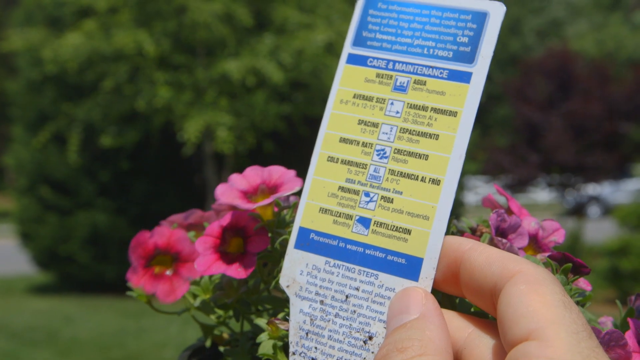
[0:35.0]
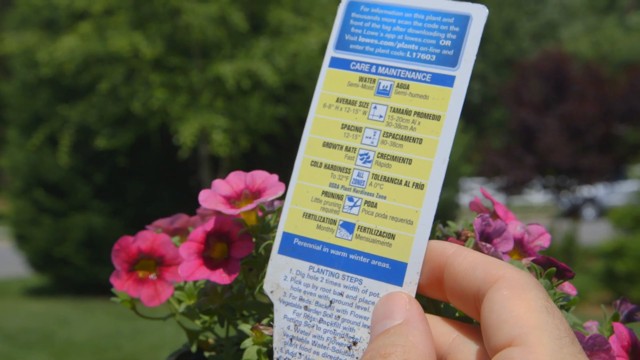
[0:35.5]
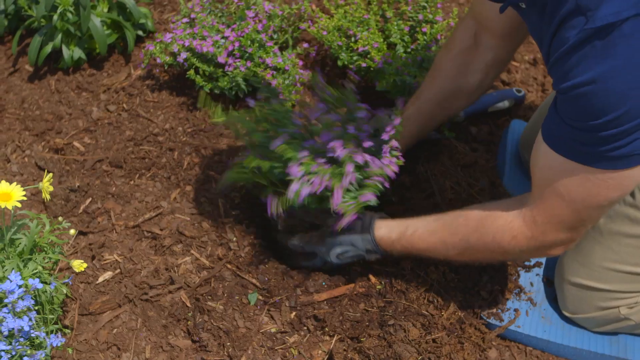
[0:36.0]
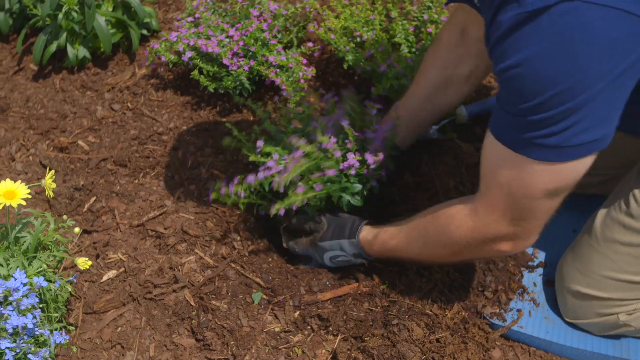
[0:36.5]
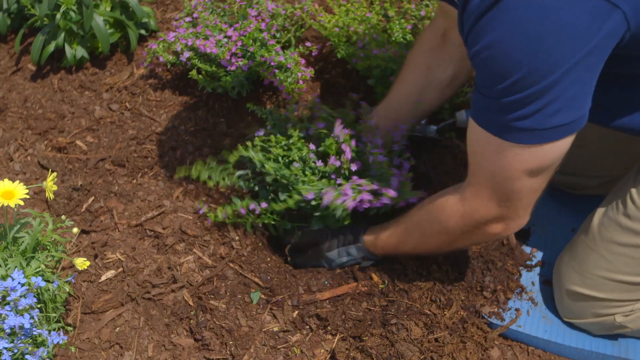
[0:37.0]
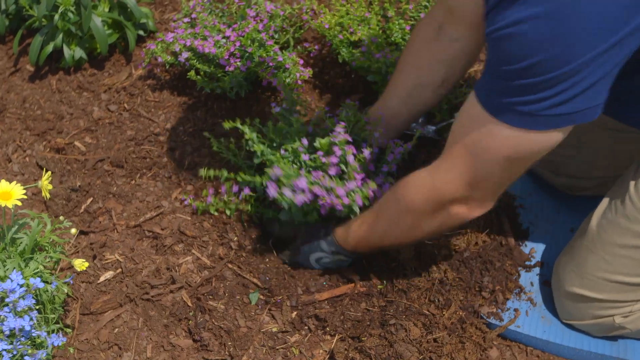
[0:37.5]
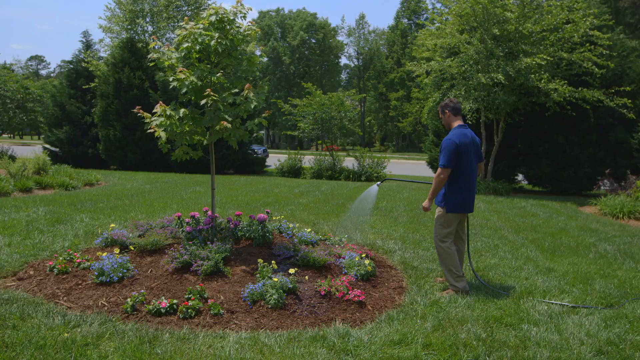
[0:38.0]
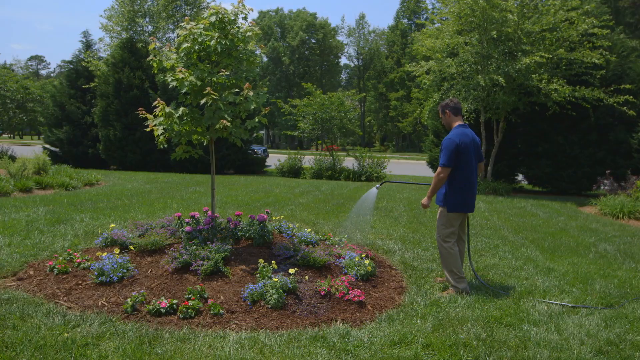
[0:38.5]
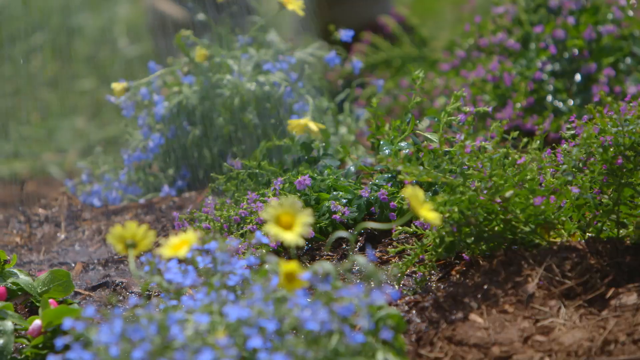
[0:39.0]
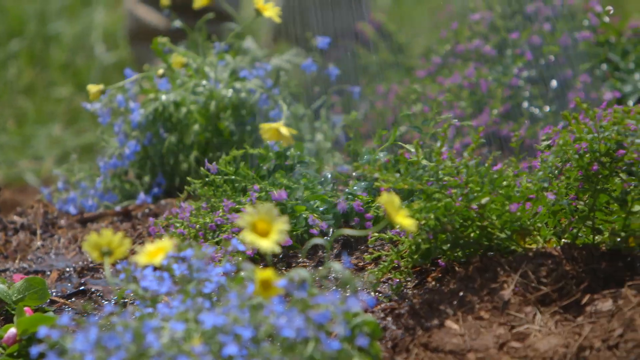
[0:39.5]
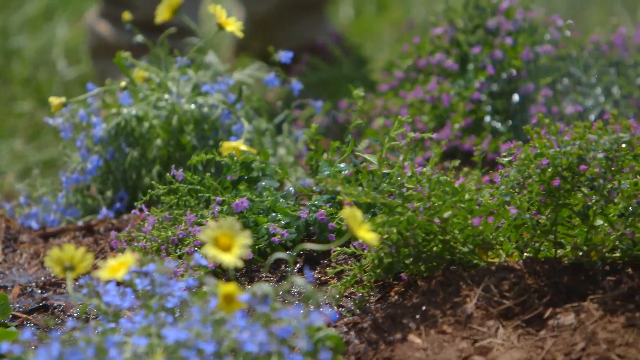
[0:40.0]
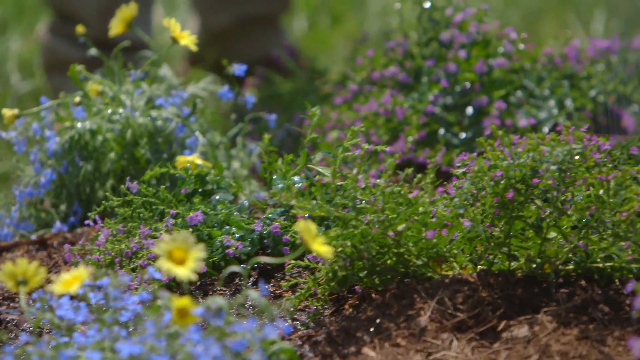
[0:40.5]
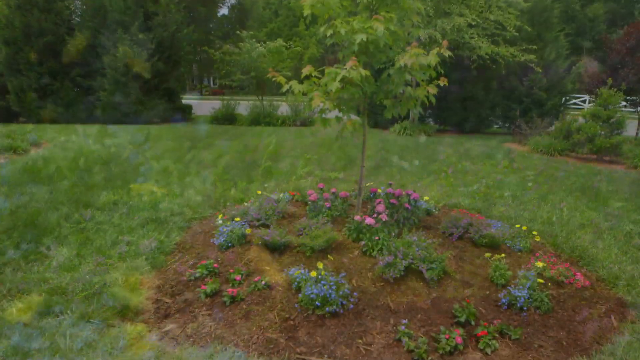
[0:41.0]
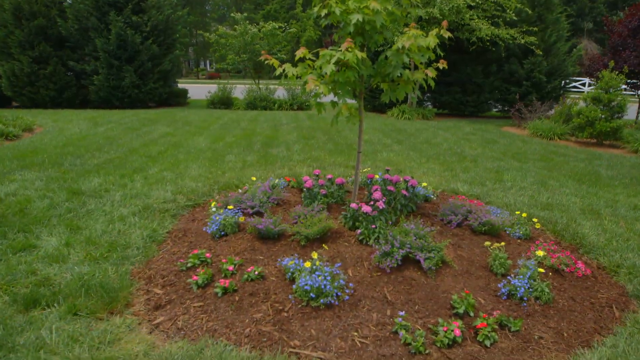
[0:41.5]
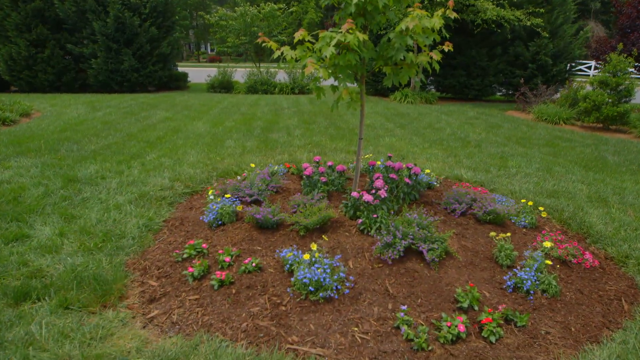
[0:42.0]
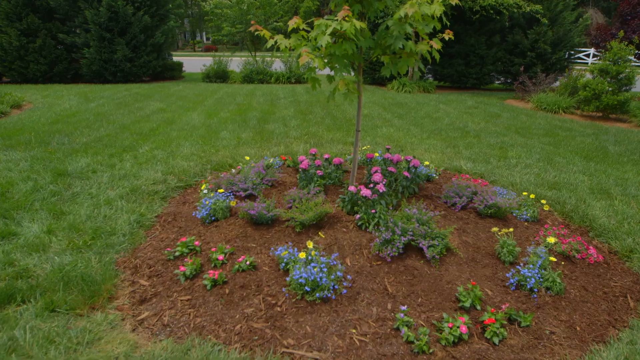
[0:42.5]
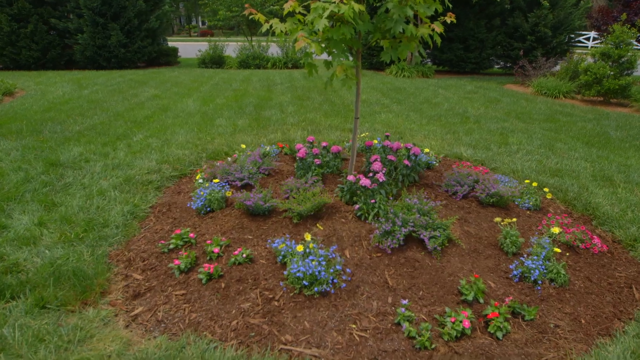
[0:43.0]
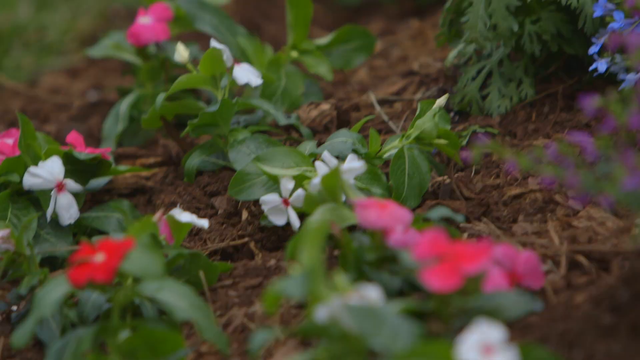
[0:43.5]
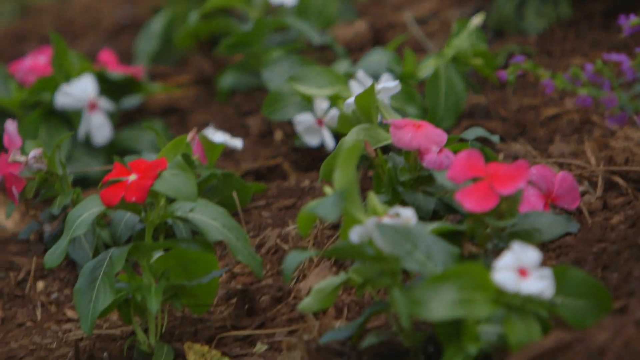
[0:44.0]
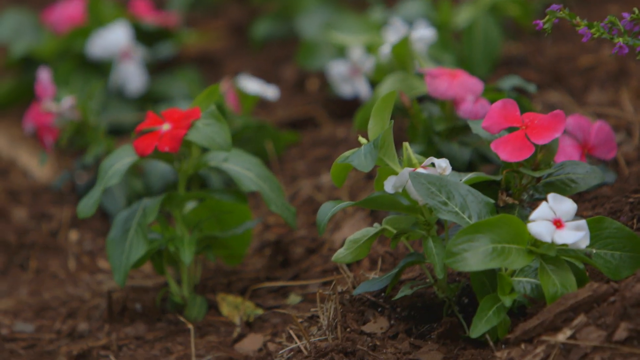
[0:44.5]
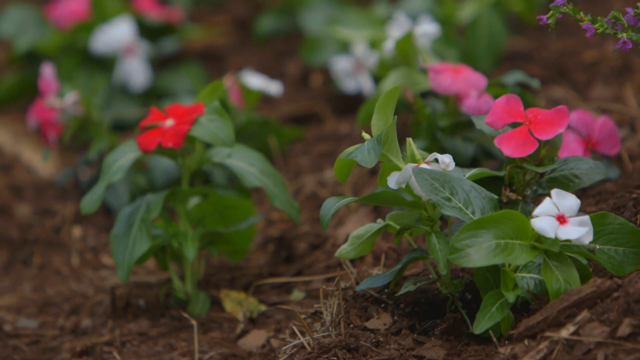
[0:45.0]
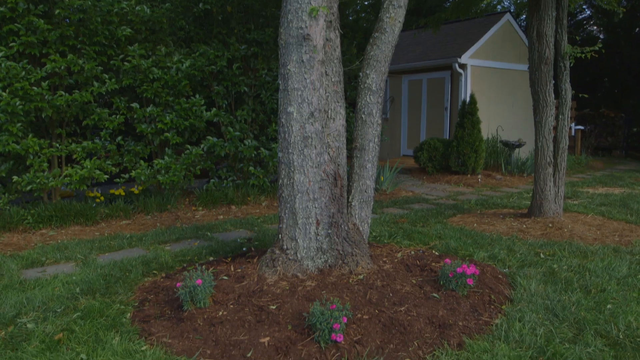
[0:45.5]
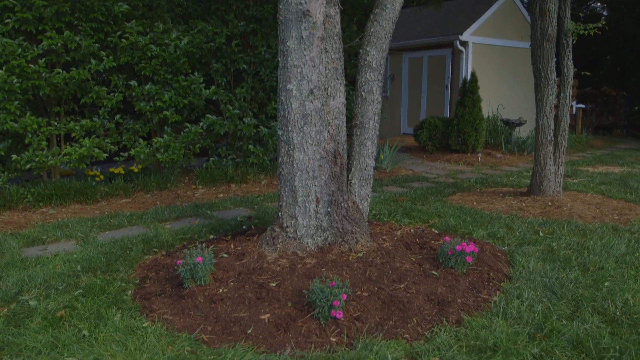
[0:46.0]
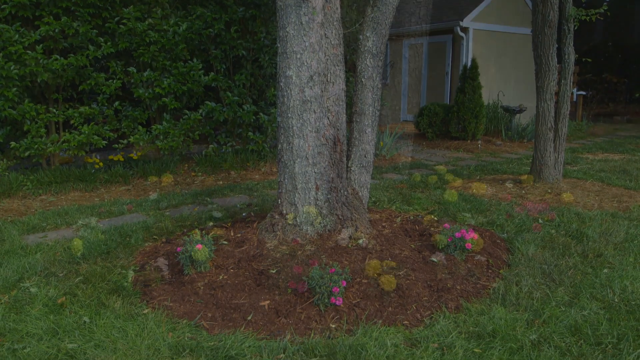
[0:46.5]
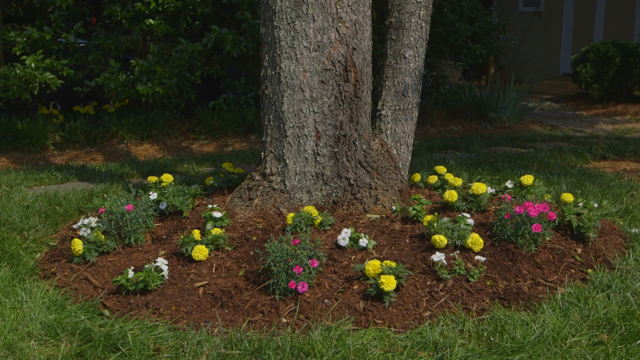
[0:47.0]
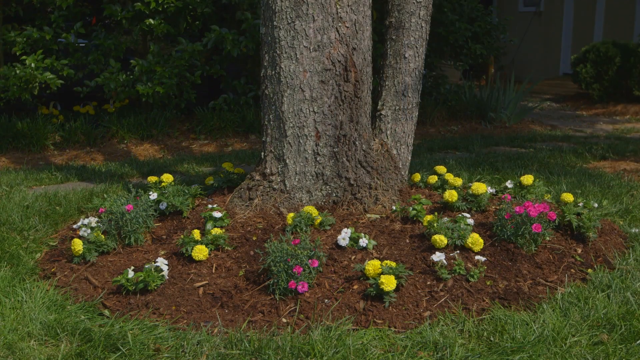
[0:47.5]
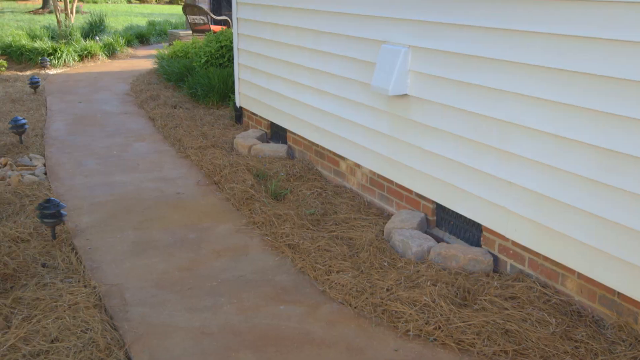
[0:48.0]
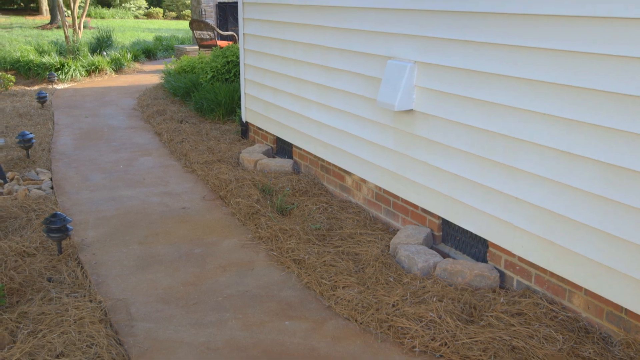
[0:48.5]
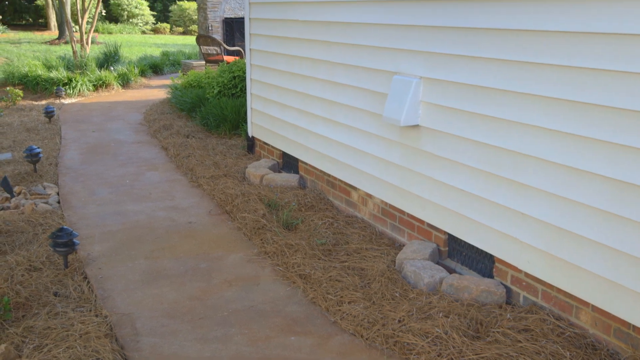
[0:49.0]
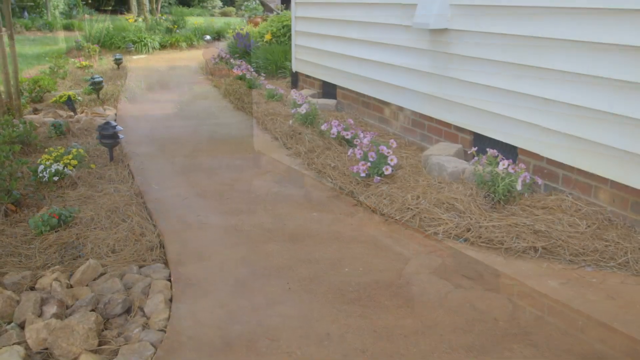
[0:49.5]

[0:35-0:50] The person shows what appears to be a care and maintenance card for the plant, with the camera zoomed in on their right hand holding the card and pink flowers in the background. After a moment, the video transitions to someone on their knees planting some purple flowers in the dirt, kind of twisting them into the dirt. A man stands on grass watering plants and flowers in front of him, and the camera zooms in on the yellow and purple flowers being watered as it pans up. A slightly overhead view shows a circular area with groups of flowers planted in the dirt, and then the camera zooms in close and low on some red, pink and white flowers in the dirt. A time transition of a tree follows: at first there are not many flowers around it, and then yellow, pink and white flowers appear. A walkway then transitions to a different view of the same walkway, now with purple and yellow flowers along both sides.